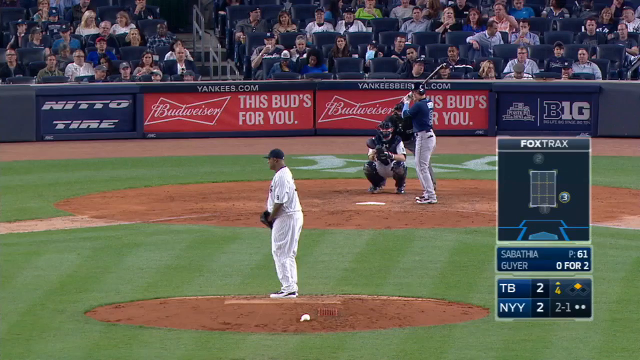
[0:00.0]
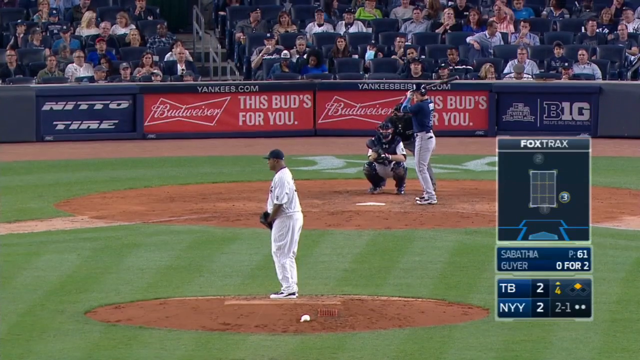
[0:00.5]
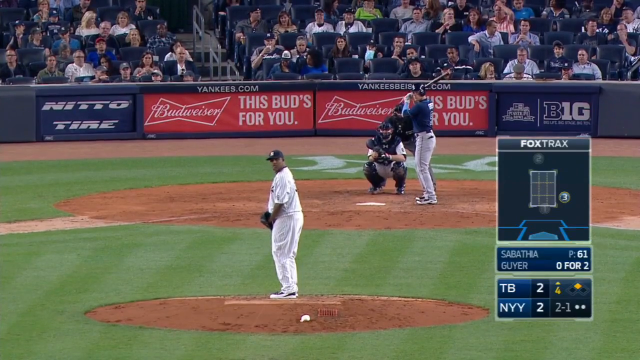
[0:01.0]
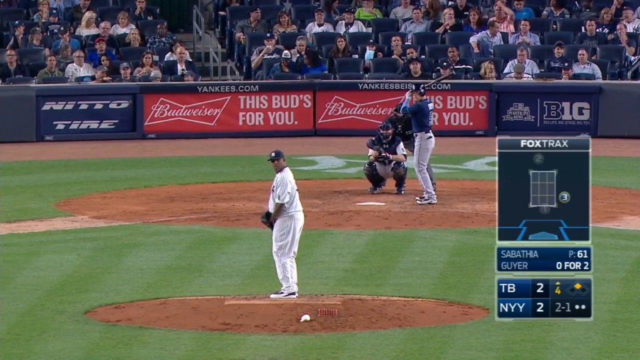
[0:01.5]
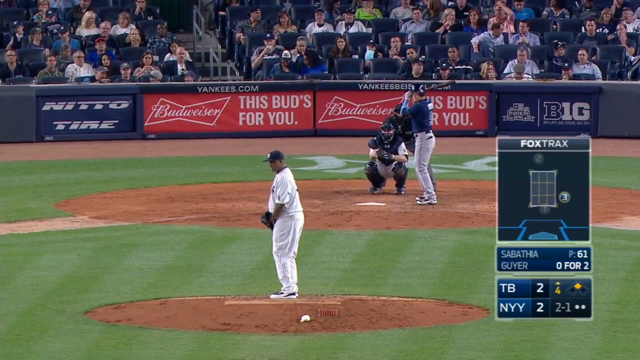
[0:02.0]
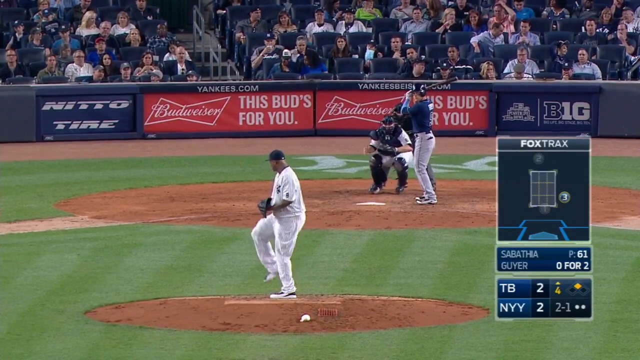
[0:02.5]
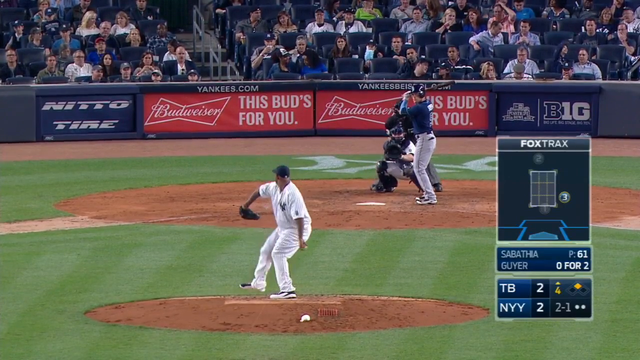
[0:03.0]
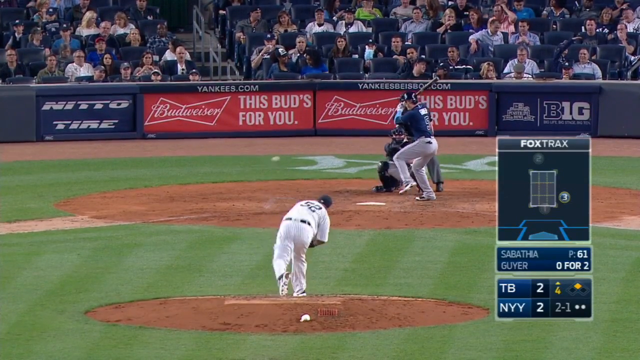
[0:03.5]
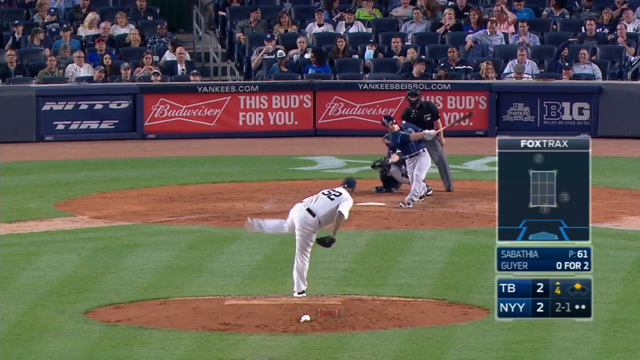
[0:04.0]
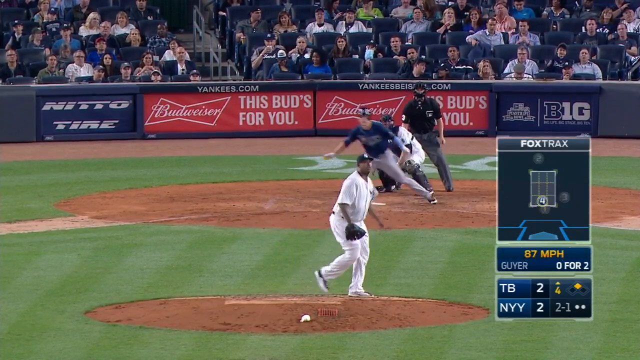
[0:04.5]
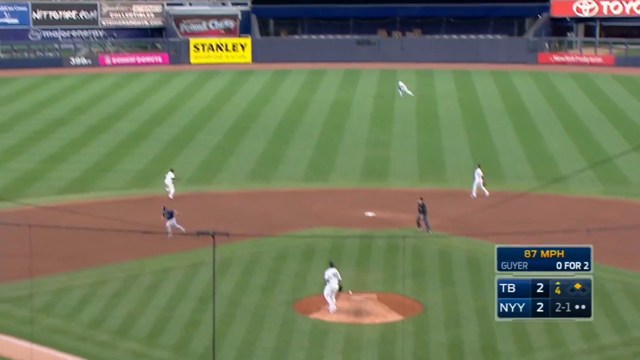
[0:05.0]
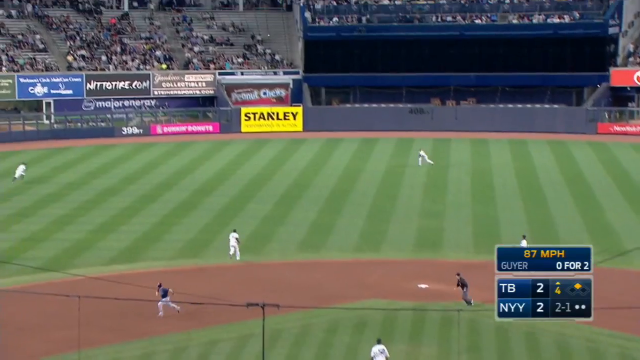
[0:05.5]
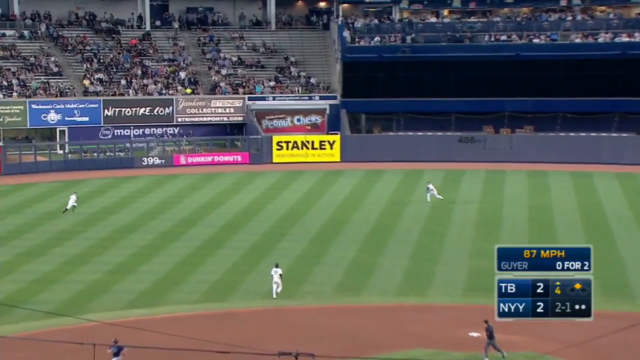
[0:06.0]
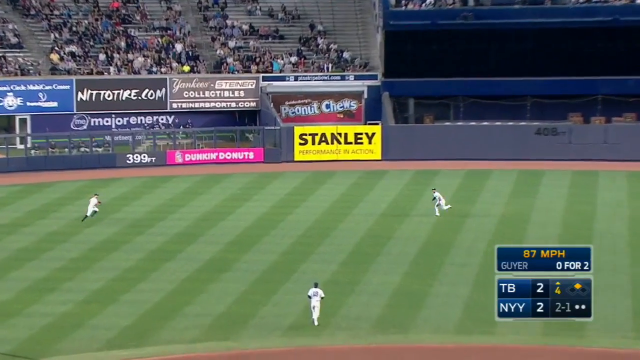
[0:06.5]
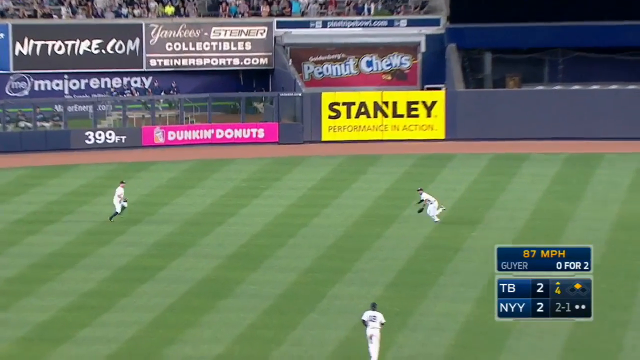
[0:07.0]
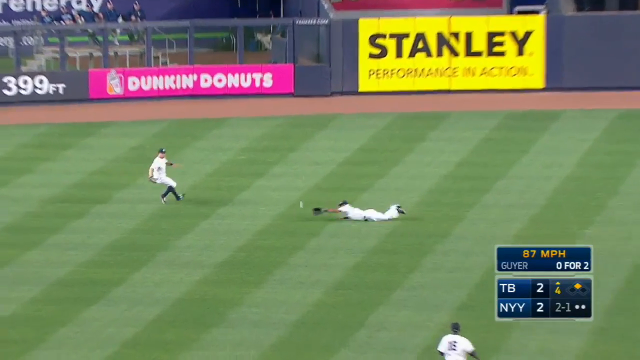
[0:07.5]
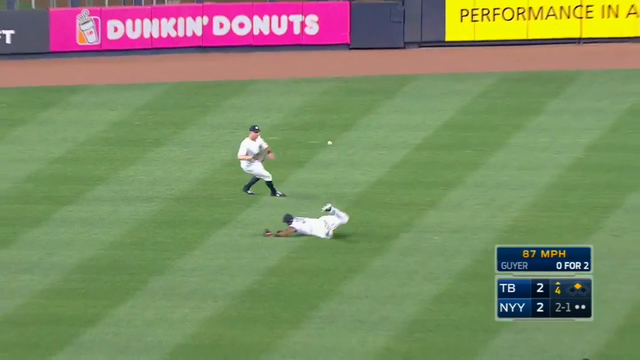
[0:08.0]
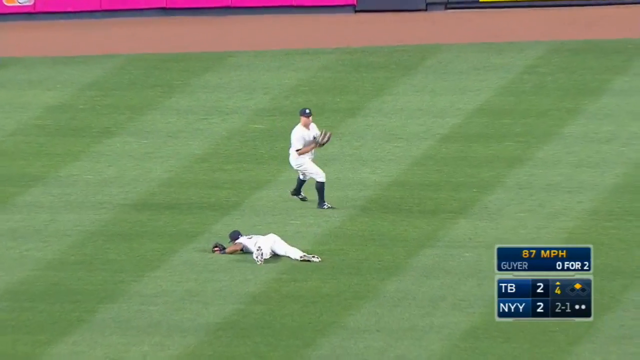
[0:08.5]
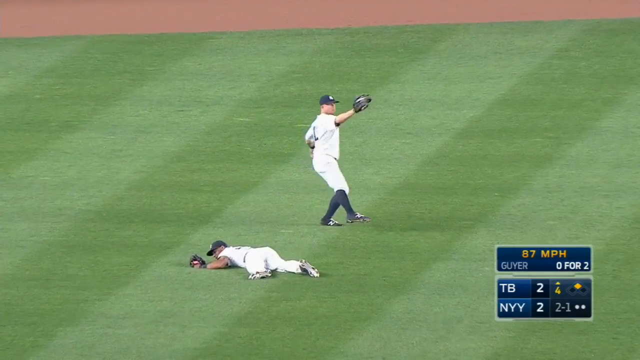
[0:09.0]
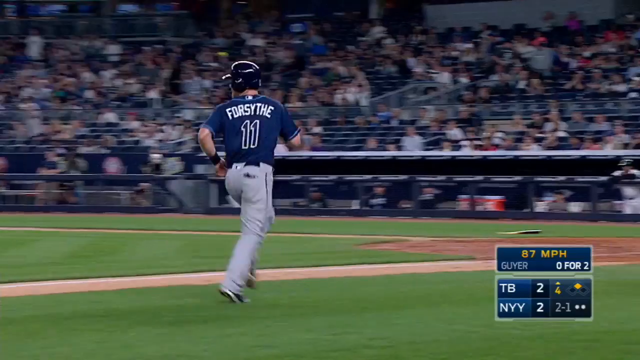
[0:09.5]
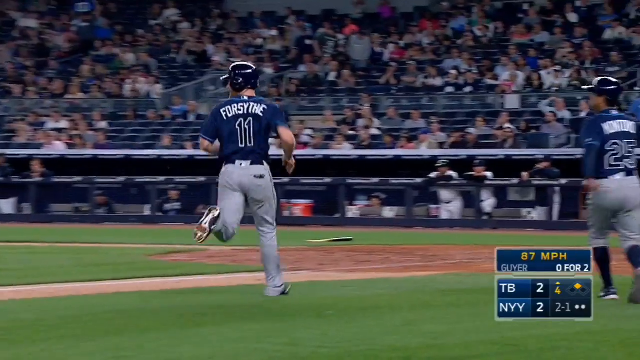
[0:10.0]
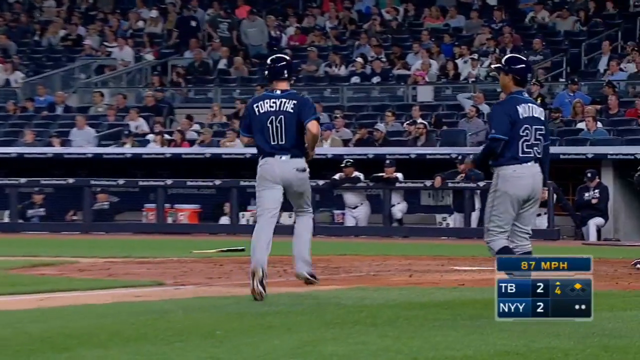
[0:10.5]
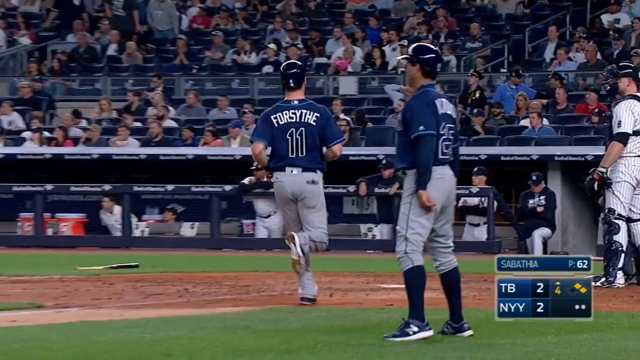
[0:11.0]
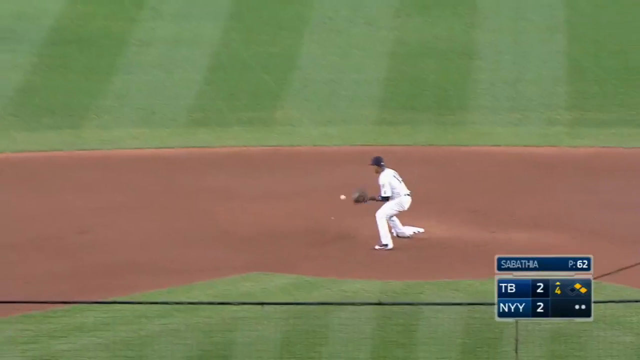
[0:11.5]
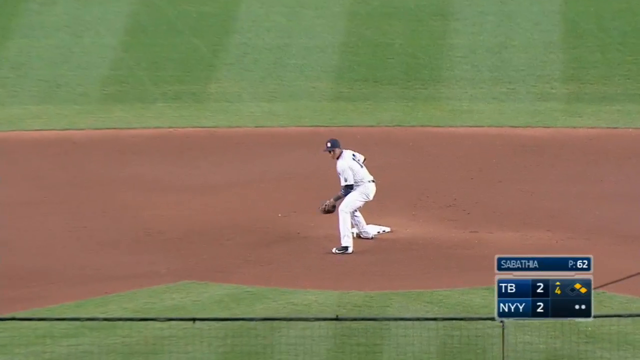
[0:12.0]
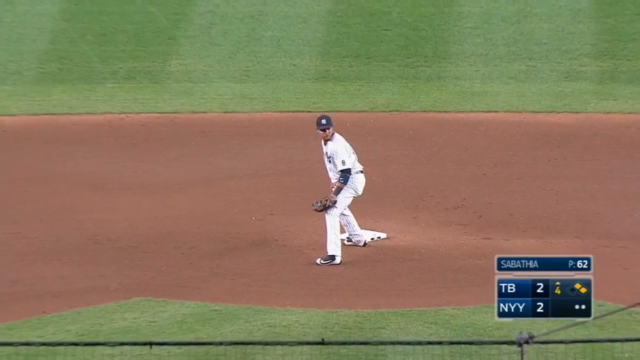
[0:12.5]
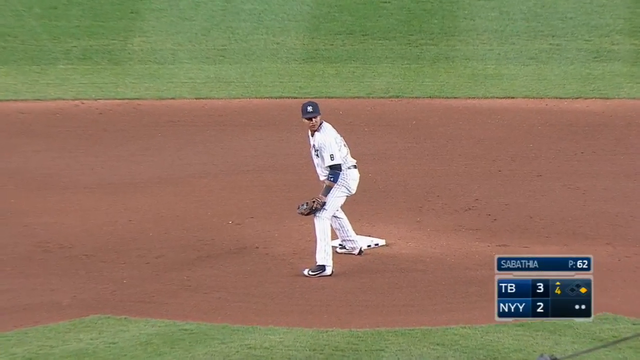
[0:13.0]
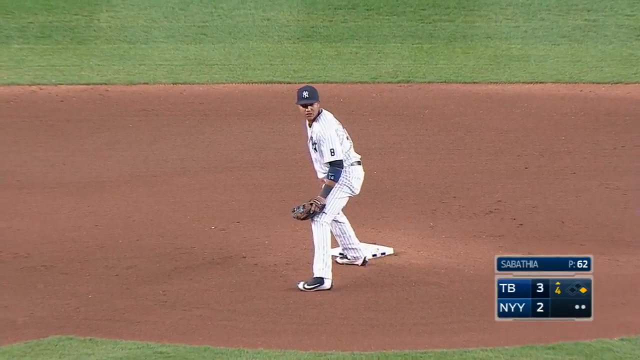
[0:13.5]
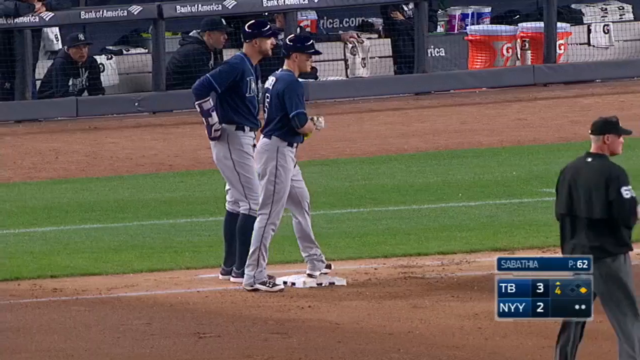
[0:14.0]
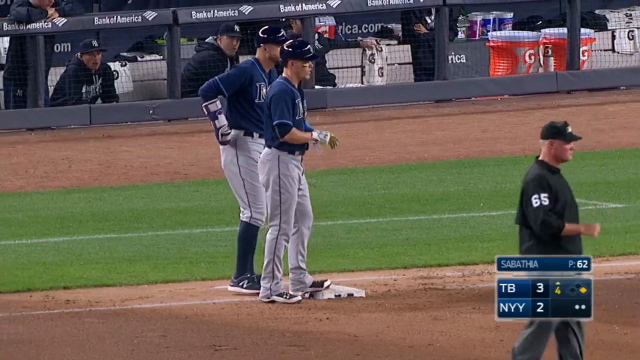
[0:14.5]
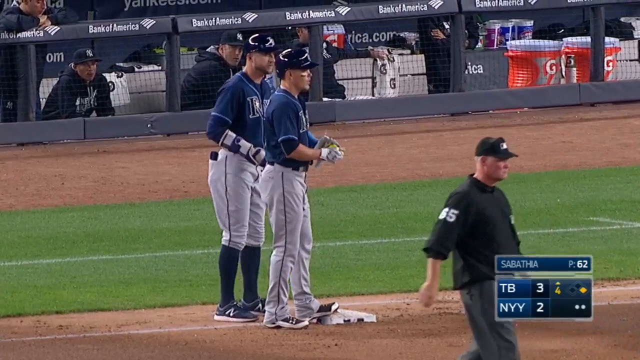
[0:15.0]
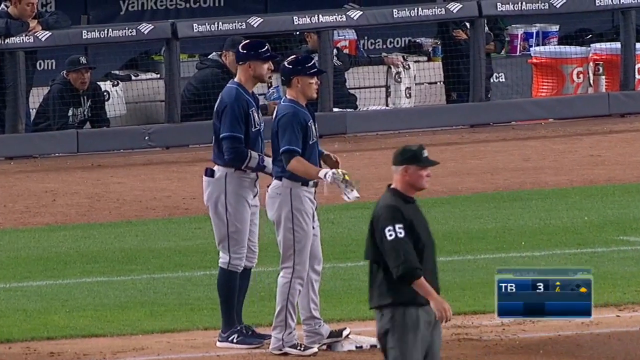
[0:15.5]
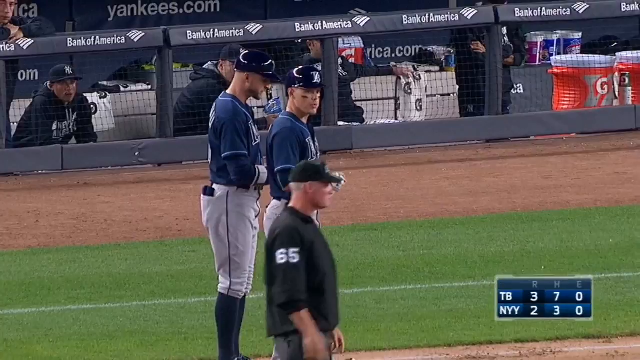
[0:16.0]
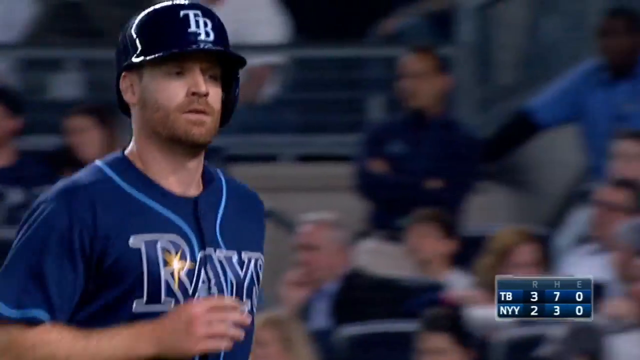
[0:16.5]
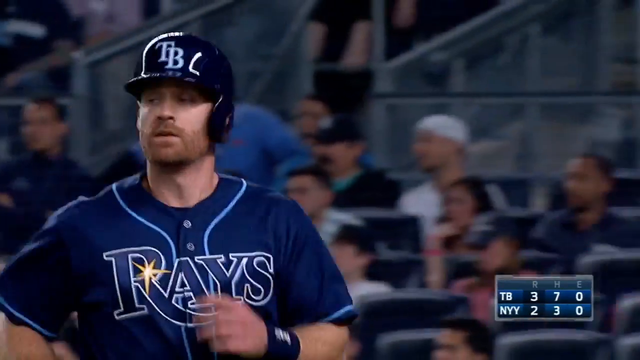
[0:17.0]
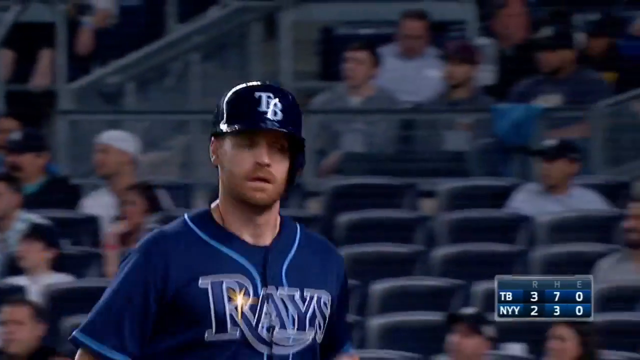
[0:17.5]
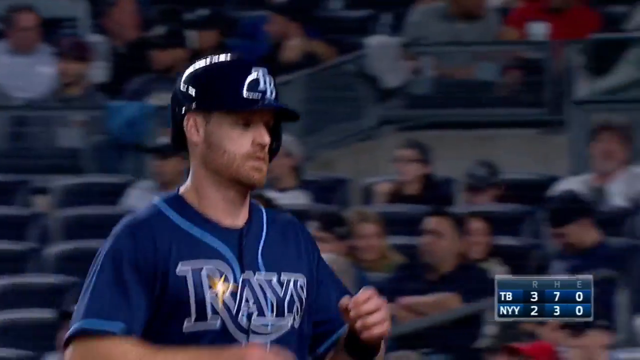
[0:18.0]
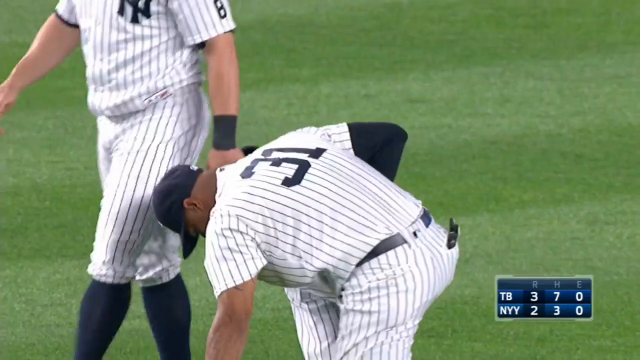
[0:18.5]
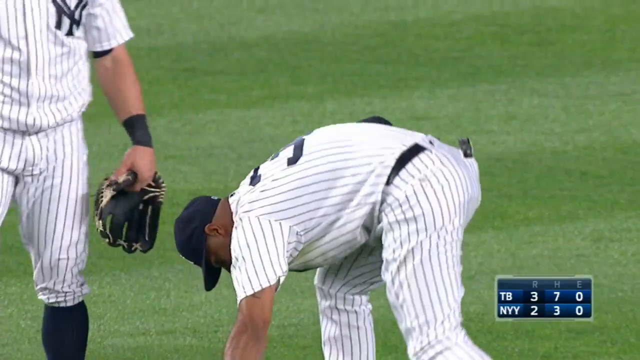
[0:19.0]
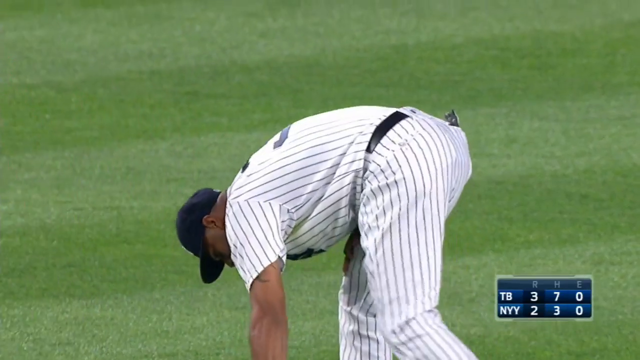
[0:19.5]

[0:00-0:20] A baseball match seems to be taking place. There are four men on the field: a catcher wearing all black, a batter wearing a blue shirt with white pants, a pitcher wearing all white with a baseball hat, and a man wearing a black shirt and grey pants behind the catcher. On the right-hand side there seems to be a scoreboard showing TB equalling 2 and NYY equalling 2. The batter moves the bat behind his head while the catcher backs further behind the batter. The pitcher moves his arm forward, throwing the ball with force. The batter swings, the bat makes contact with the ball, and the ball flies high up into the air. The pitcher looks up into the sky, and the batter makes a run. A wide view of the field reveals a stadium filled with people. One of the catchers, all of whom seem to be wearing white, runs to catch the ball but stumbles onto the ground. The catcher next to him, wearing all white, catches the ball and throws it to another catcher, seen in the next shot. This catcher catches the ball, and the batter is seen running around the field.